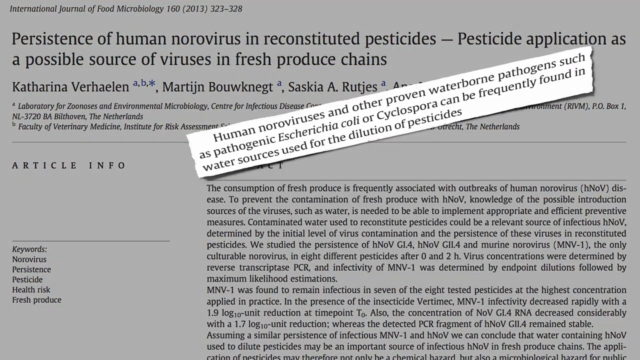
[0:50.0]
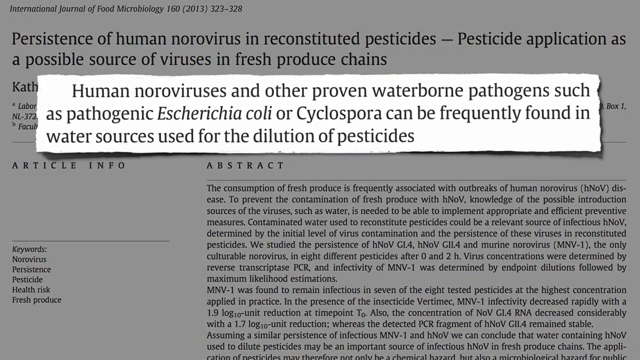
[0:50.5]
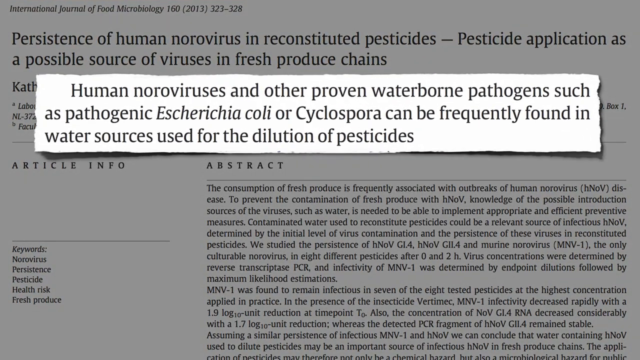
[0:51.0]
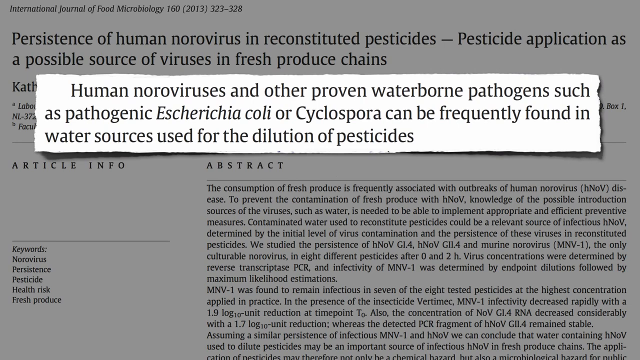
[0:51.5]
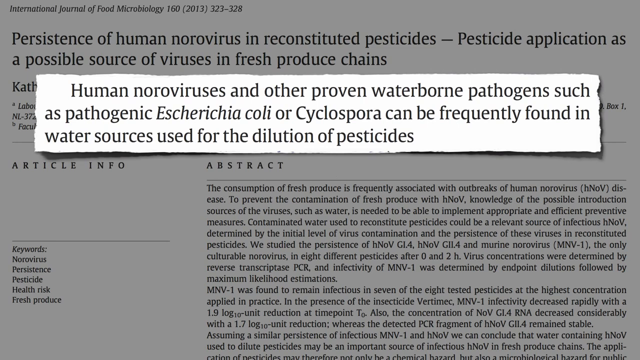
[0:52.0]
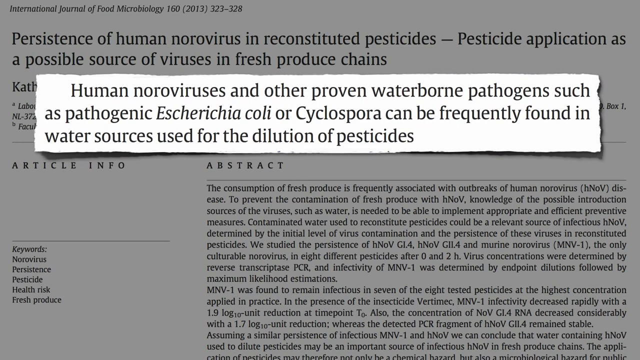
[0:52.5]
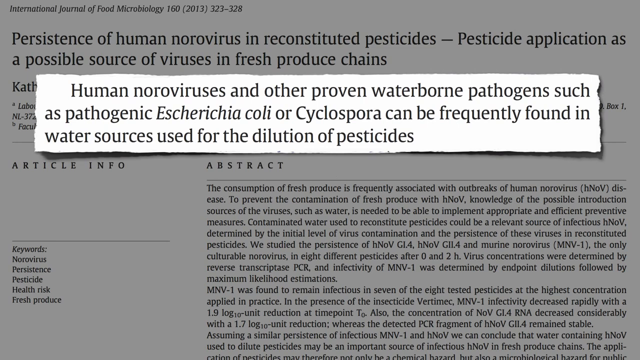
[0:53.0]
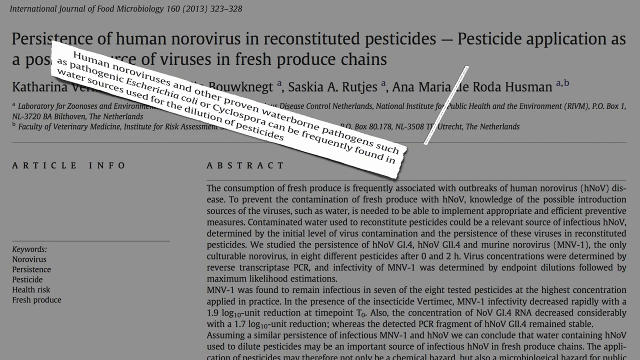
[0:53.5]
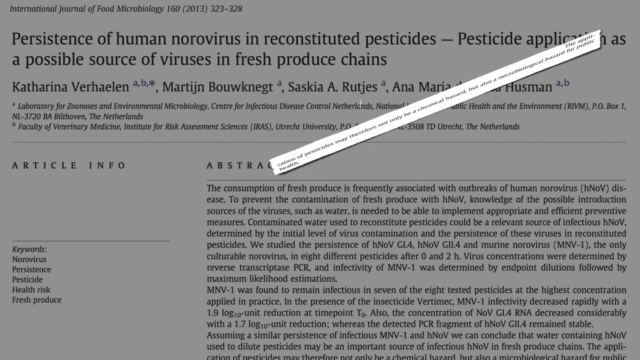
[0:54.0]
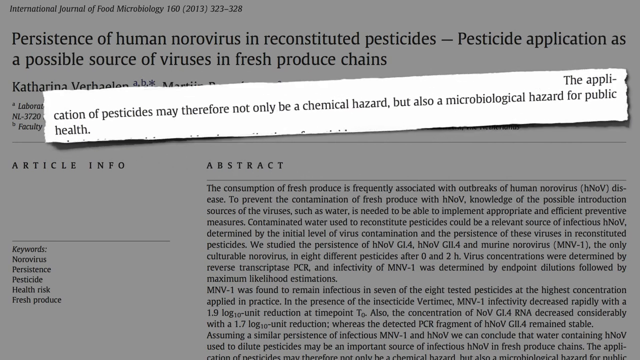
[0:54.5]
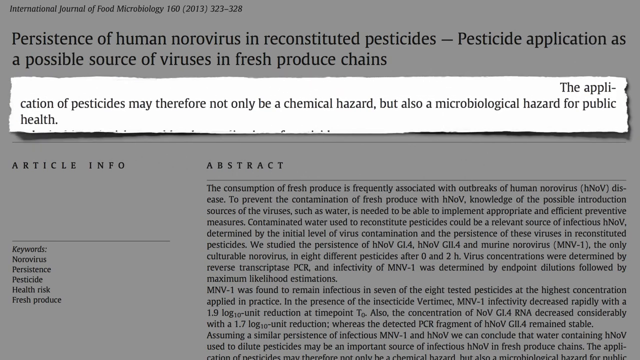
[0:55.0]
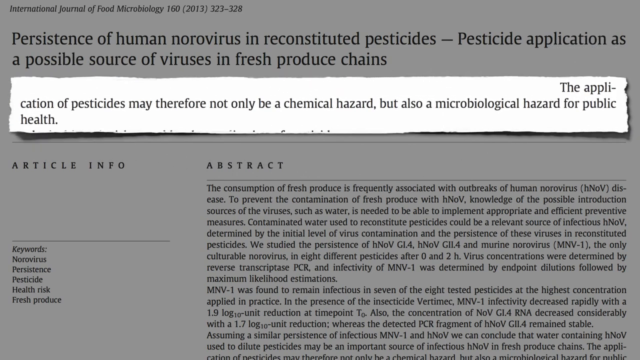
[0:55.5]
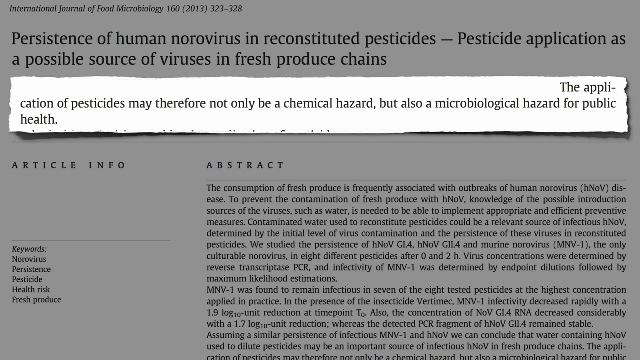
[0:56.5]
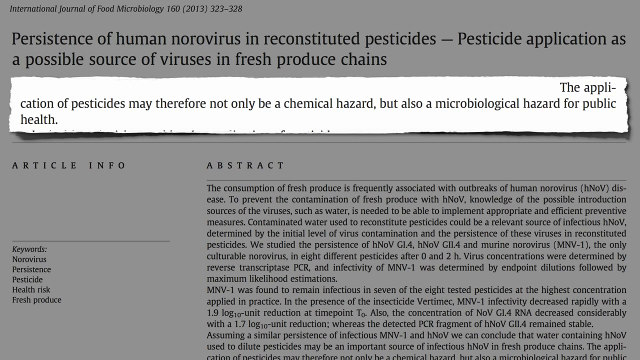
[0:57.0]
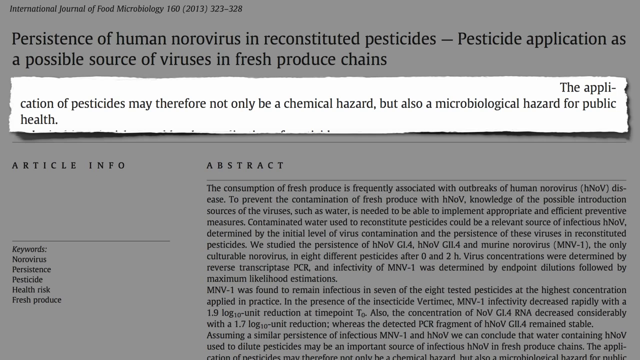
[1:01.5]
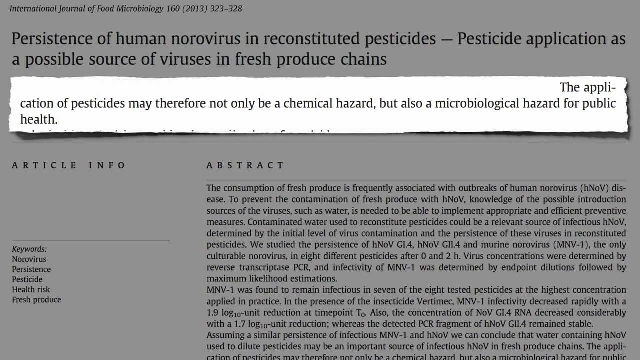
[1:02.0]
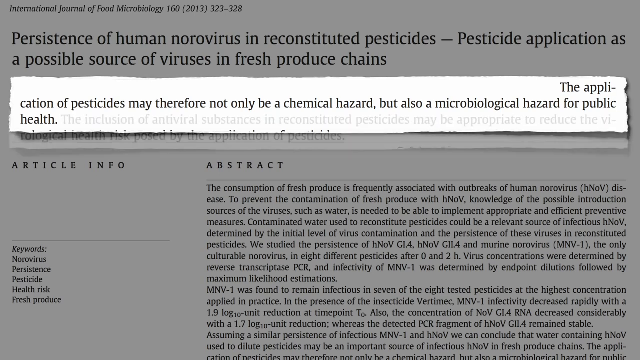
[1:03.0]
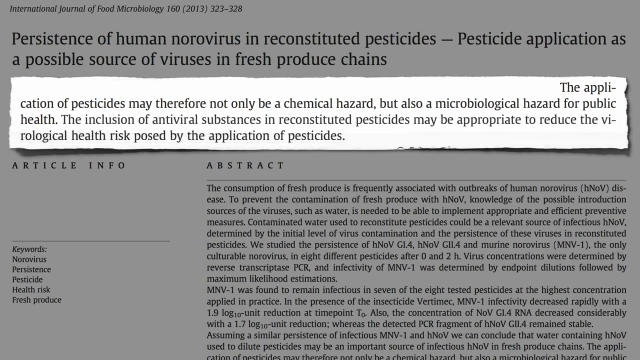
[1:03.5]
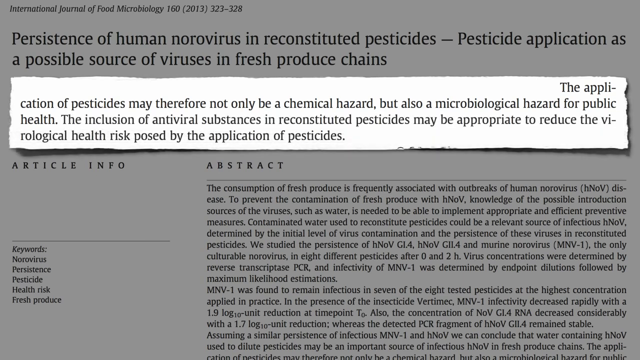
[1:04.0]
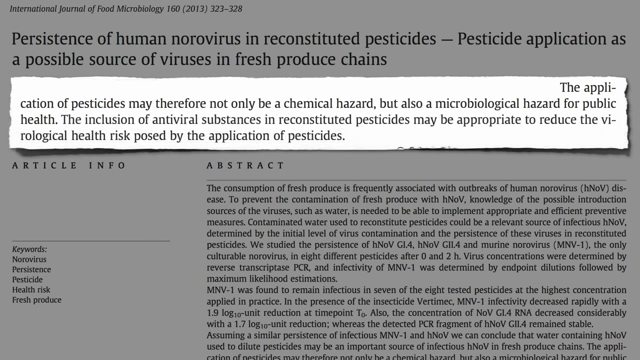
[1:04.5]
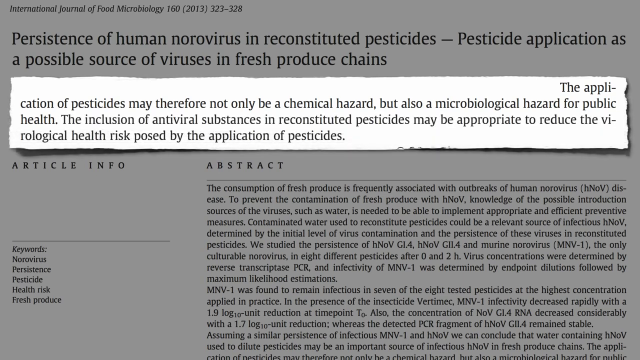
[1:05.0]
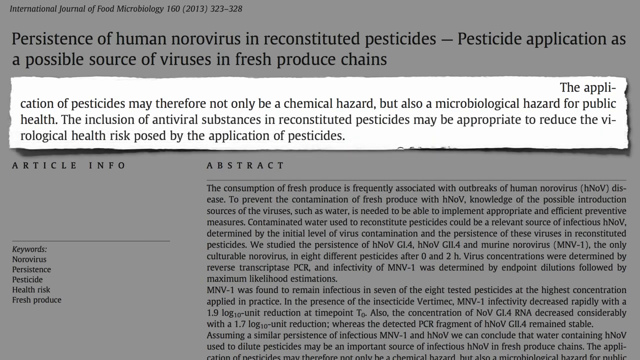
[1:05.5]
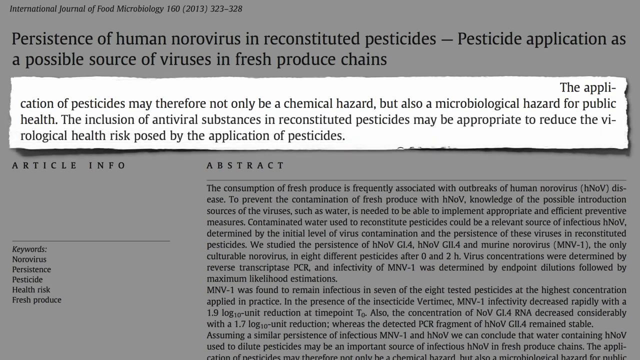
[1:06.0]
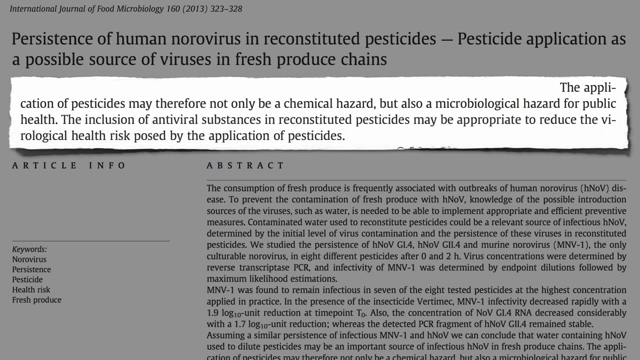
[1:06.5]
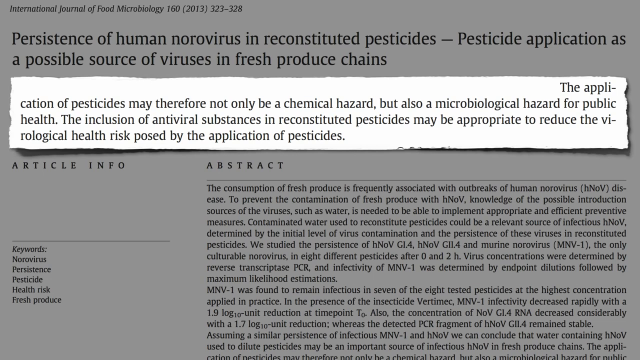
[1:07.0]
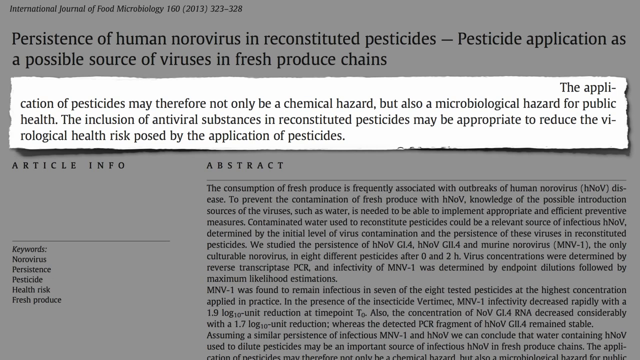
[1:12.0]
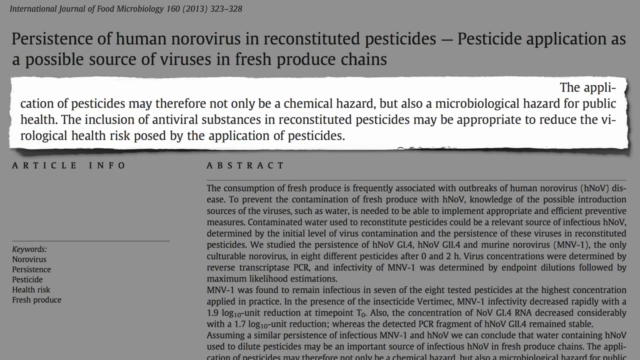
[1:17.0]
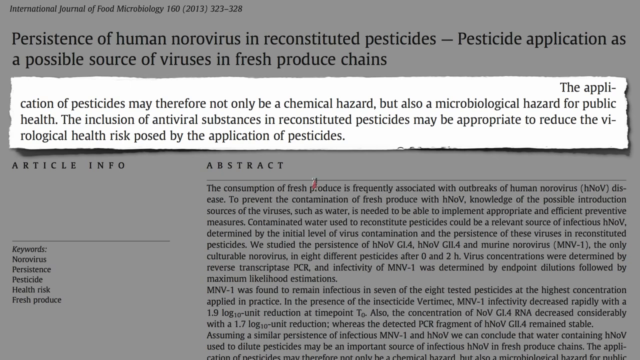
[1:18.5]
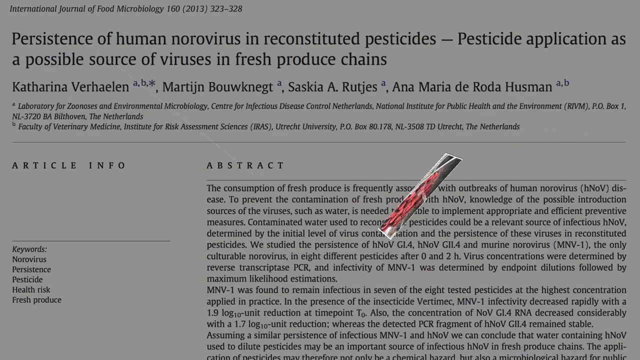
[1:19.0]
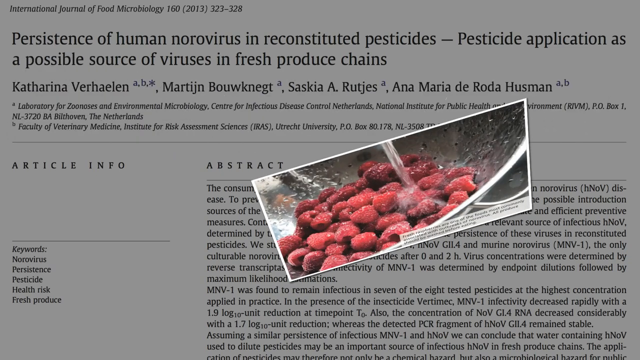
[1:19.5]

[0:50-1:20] The pesticide article's quote reads "human noroviruses and other proven waterborne pathogens, such as pathogenic" E. coli "or cyclospora can be frequently found in water sources used for the dilution of pesticides." Another quote is shown: "the application of pesticides may therefore not only be a chemical hazard but also a microbiological hazard for public health. The inclusion of antiviral substances in reconstituted pesticides may be appropriate to reduce the virological health risk posed by the application of pesticides." That quote flips away, and a photo of raspberries in a silver bowl appears.